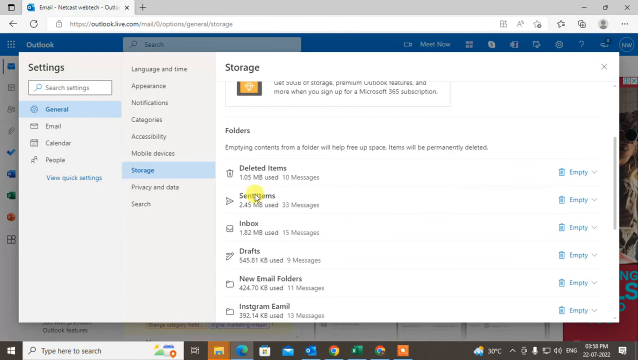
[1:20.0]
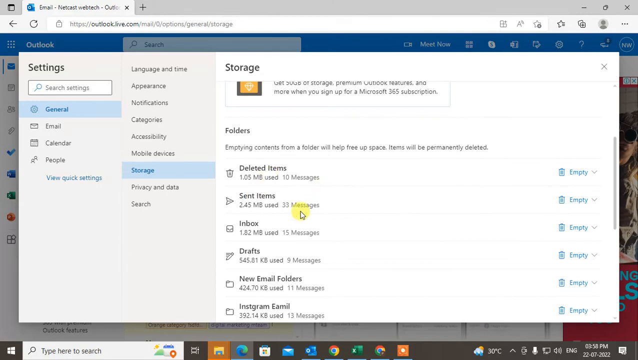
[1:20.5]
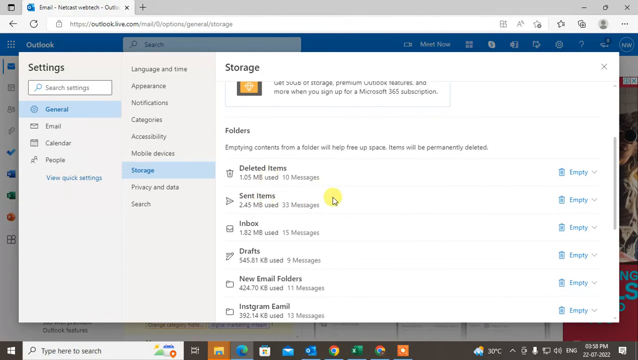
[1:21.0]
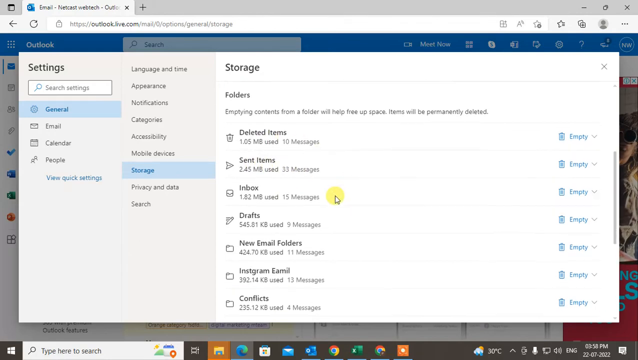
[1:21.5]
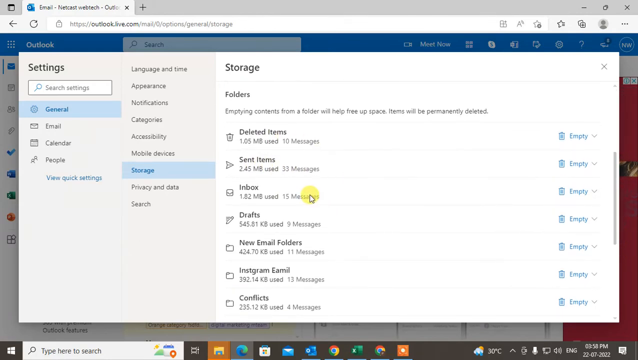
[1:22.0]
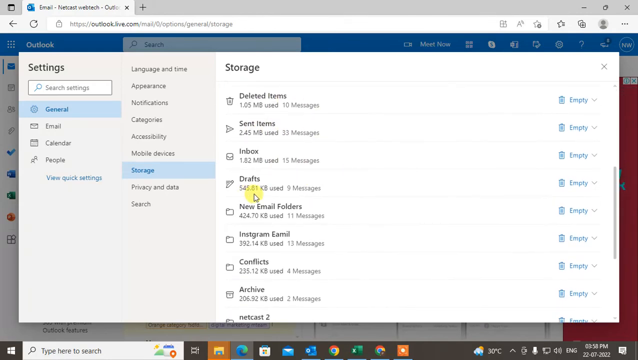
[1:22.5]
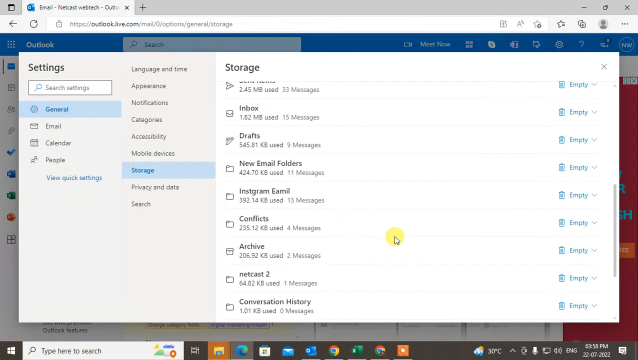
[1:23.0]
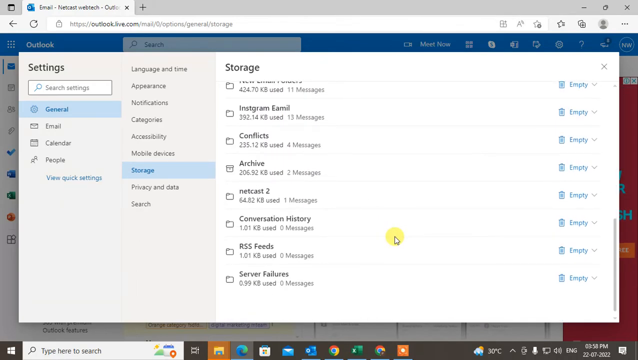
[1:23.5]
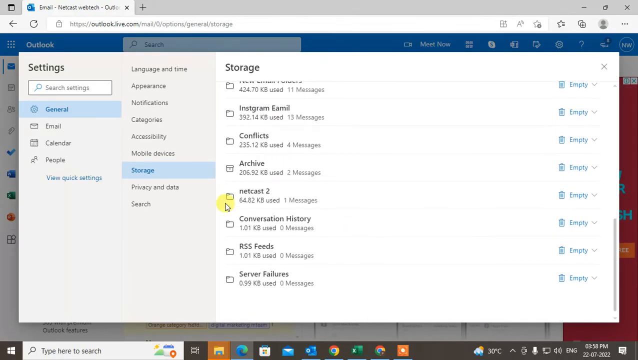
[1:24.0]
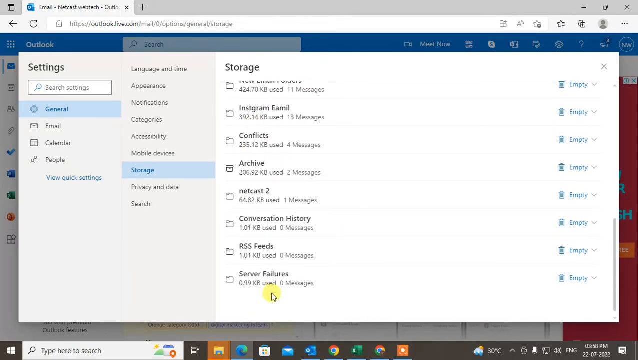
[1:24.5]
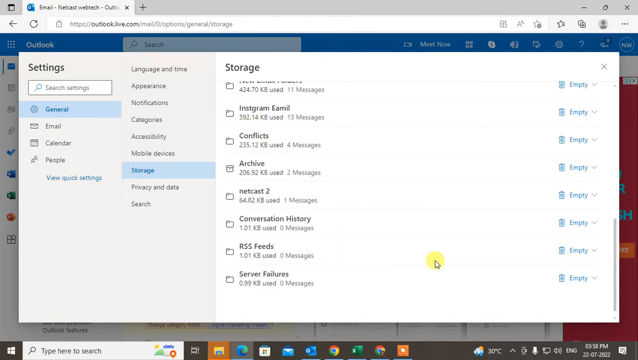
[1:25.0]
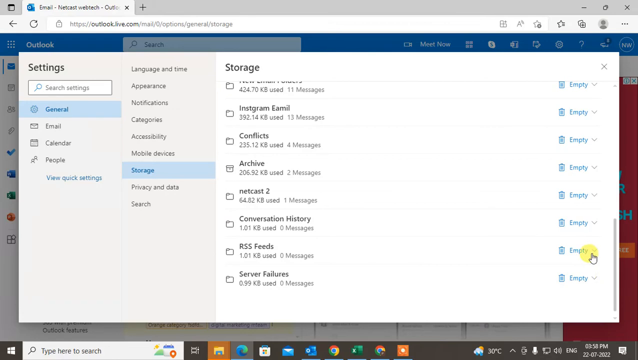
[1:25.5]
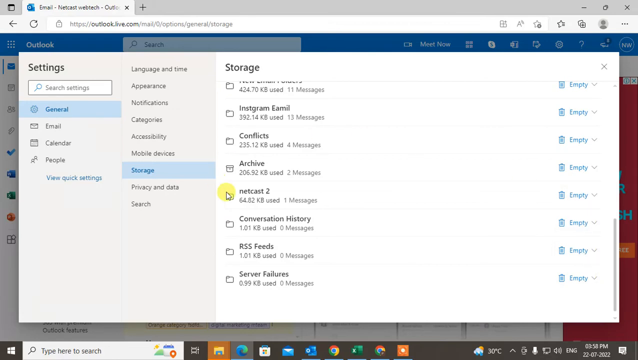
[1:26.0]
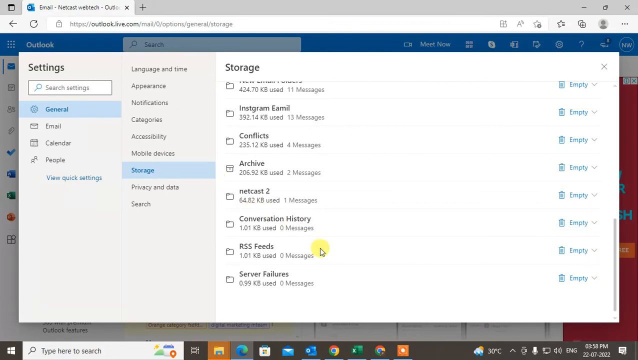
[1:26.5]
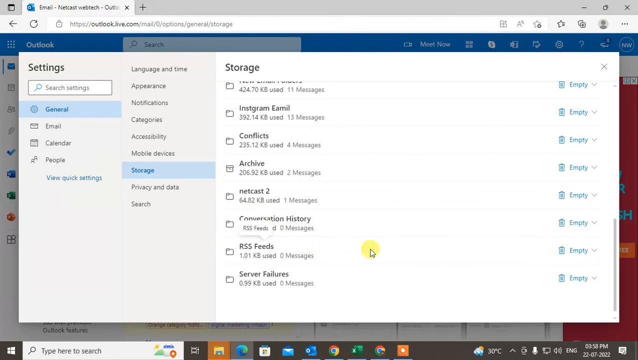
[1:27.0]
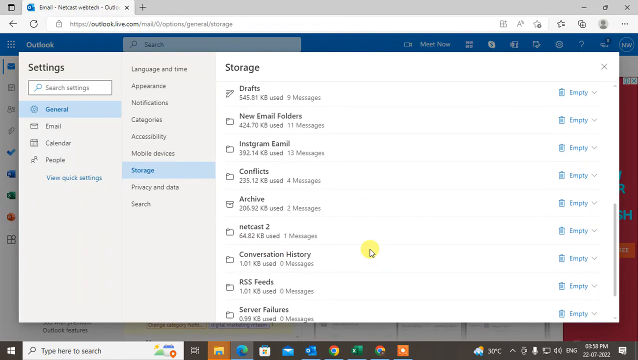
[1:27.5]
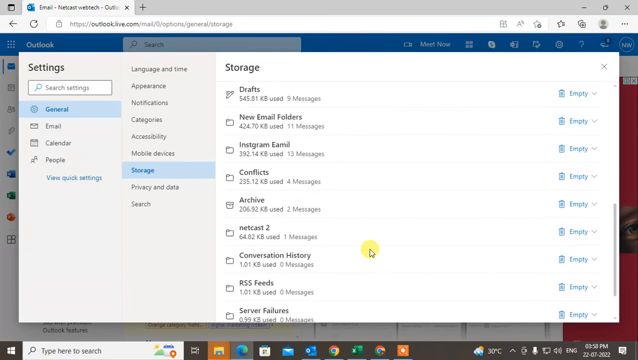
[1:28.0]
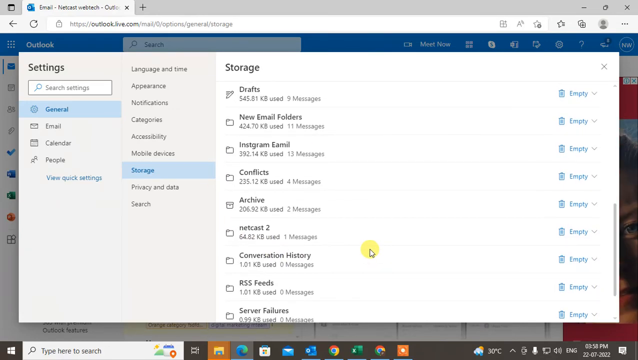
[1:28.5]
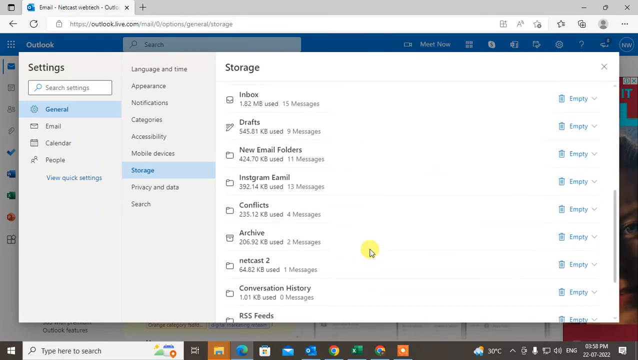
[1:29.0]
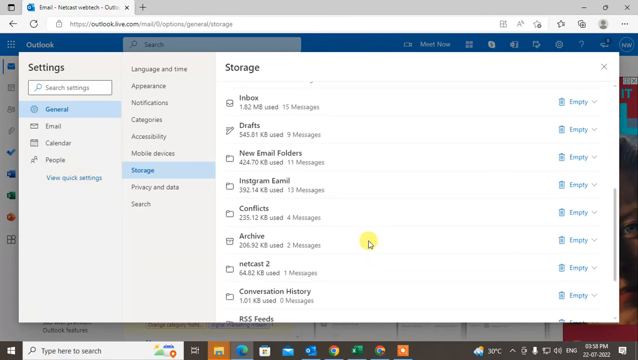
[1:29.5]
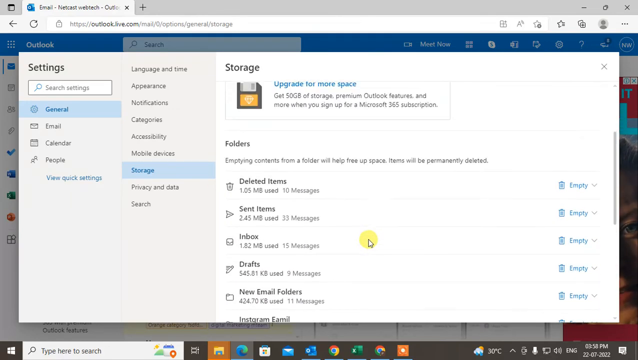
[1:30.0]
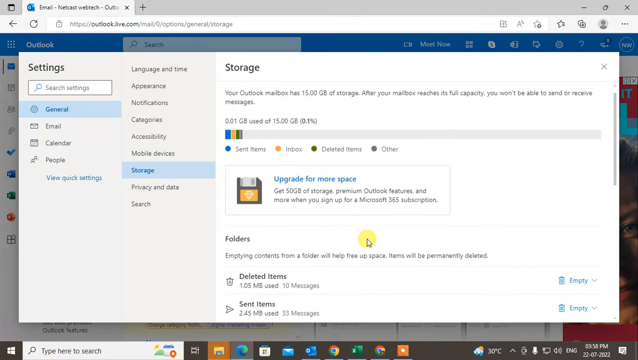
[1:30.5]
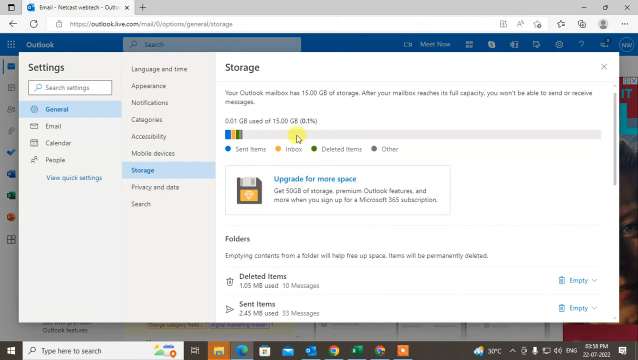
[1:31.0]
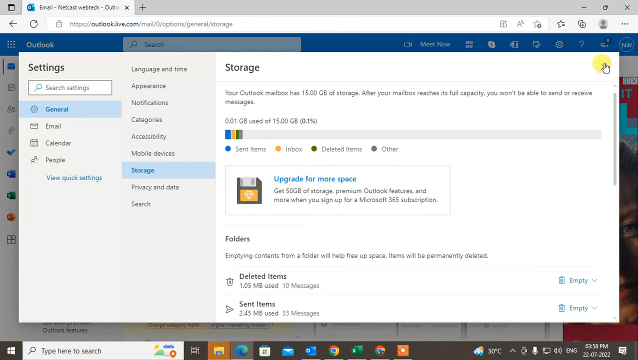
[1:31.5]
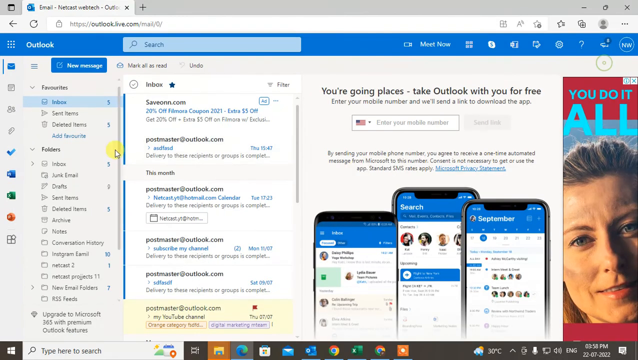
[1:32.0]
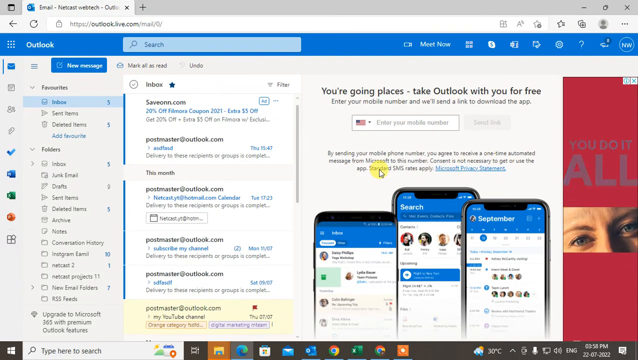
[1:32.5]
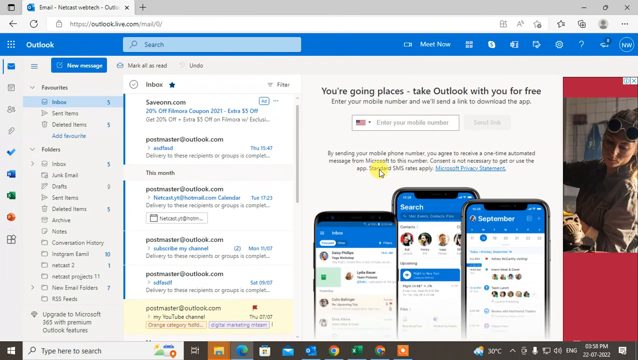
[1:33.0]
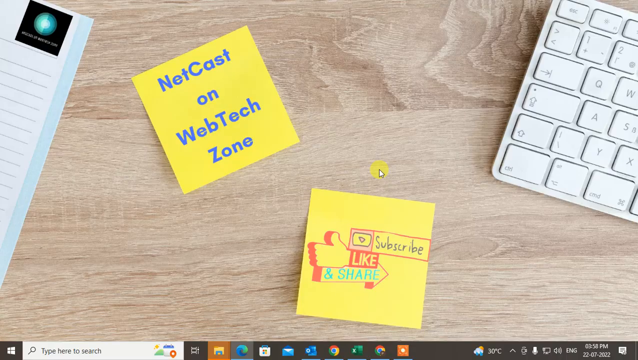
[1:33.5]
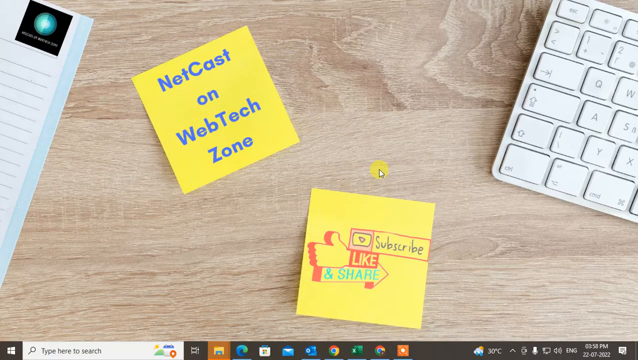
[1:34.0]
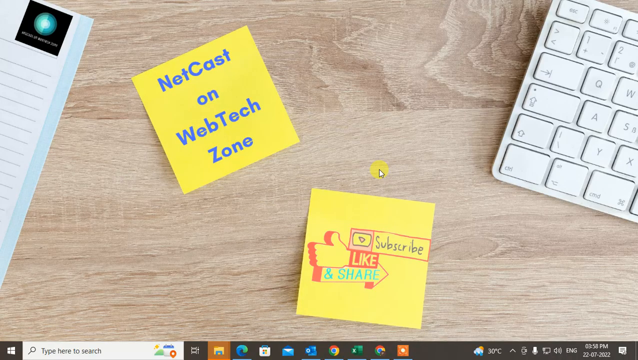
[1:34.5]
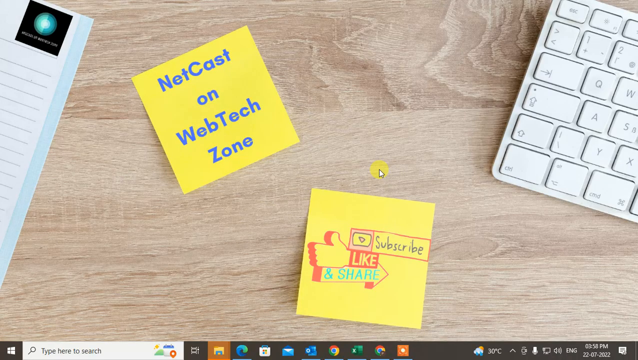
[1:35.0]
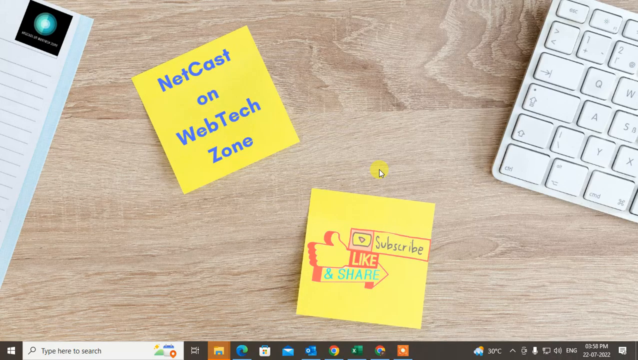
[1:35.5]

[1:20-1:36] The list of folders that can be emptied is scrolled through relatively quickly: deleted items, sent items, favorites, drafts, Instagram emails, conversation history, and RSS feeds. Nothing is actually clicked, but the list shows how much memory each folder is taking and how much can be freed up by eliminating them; it lists both the memory used and how many messages each contains. At the end, the view goes back to the Outlook program, and the mouse just hovers over it in a few circles without clicking on or executing anything.